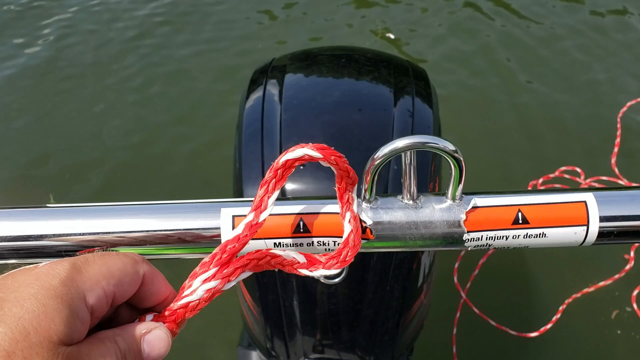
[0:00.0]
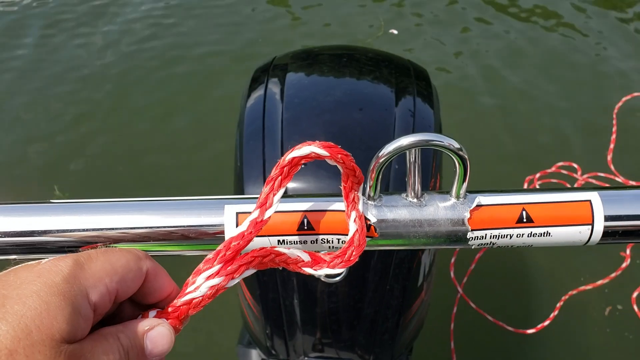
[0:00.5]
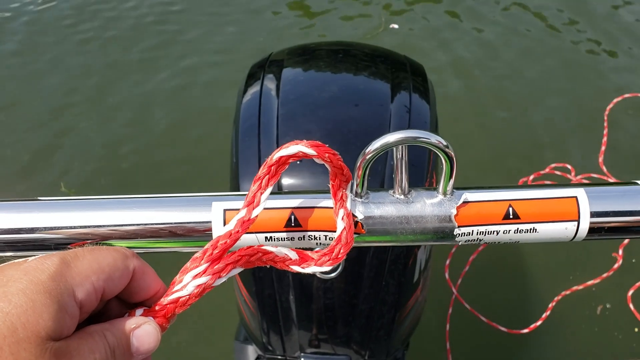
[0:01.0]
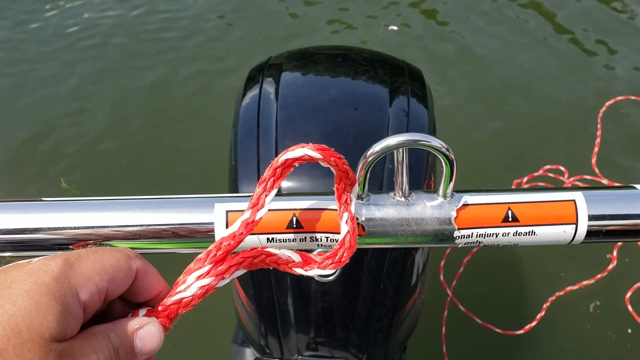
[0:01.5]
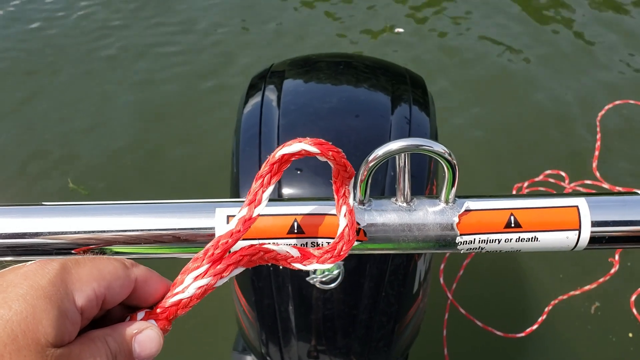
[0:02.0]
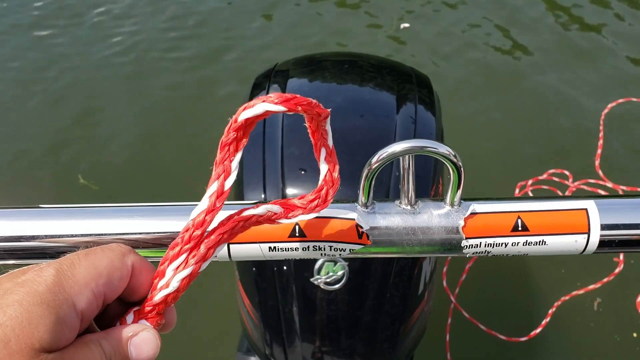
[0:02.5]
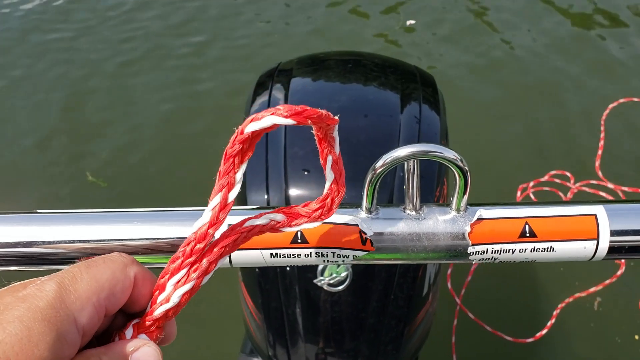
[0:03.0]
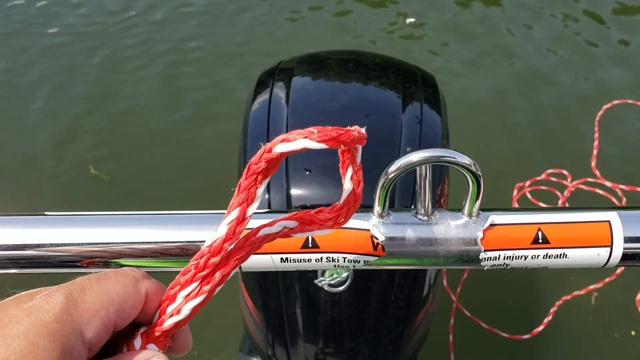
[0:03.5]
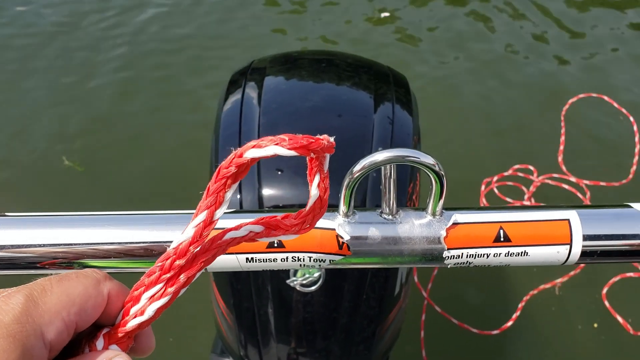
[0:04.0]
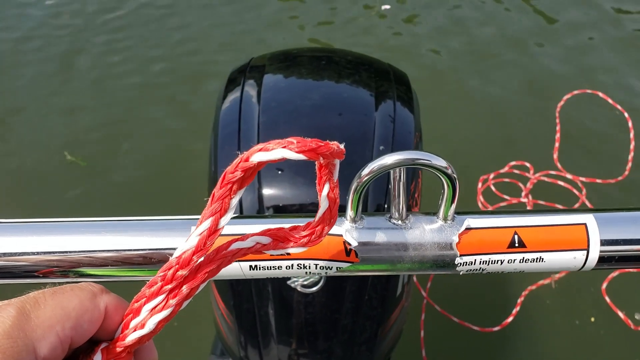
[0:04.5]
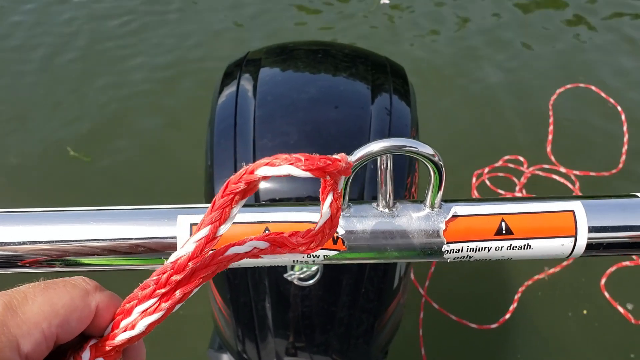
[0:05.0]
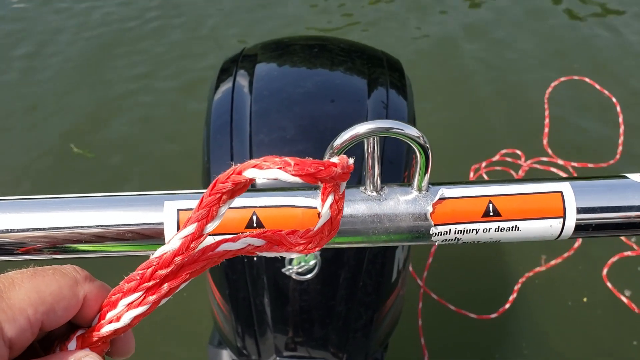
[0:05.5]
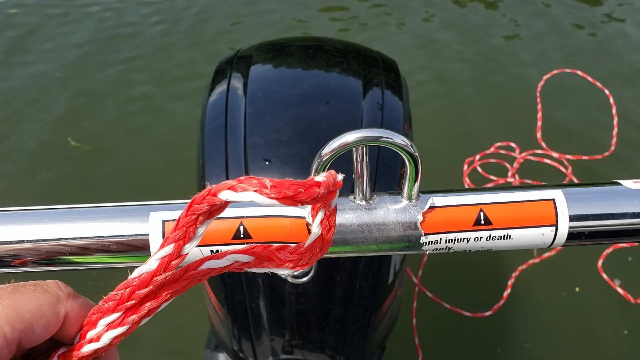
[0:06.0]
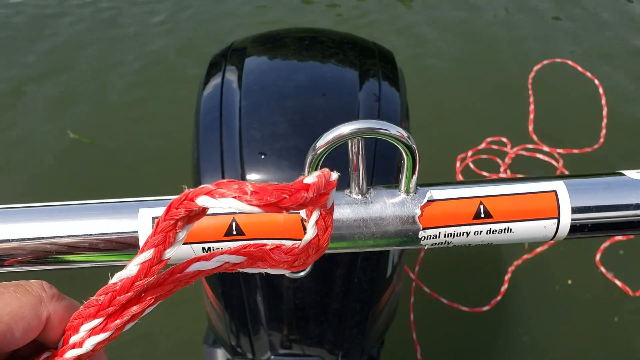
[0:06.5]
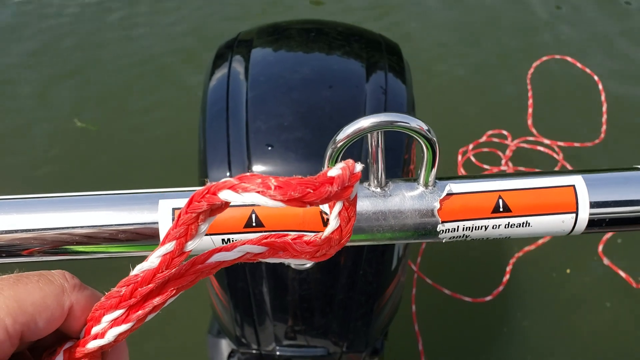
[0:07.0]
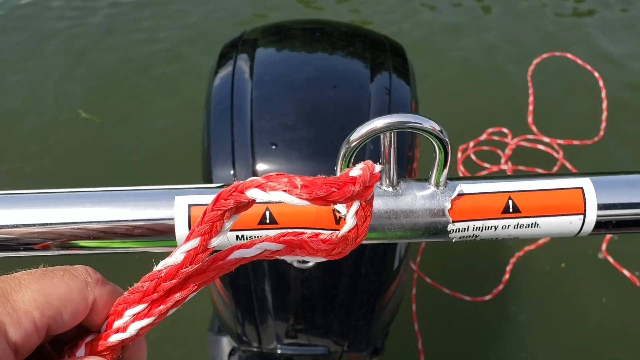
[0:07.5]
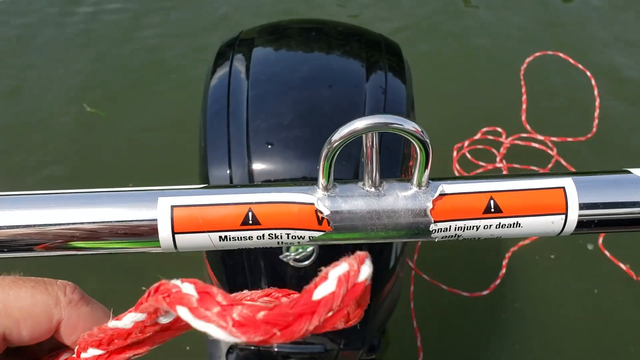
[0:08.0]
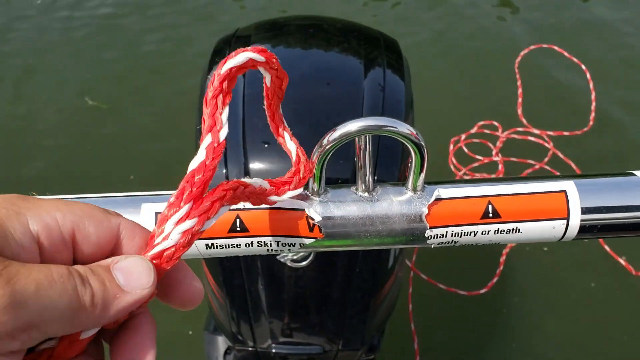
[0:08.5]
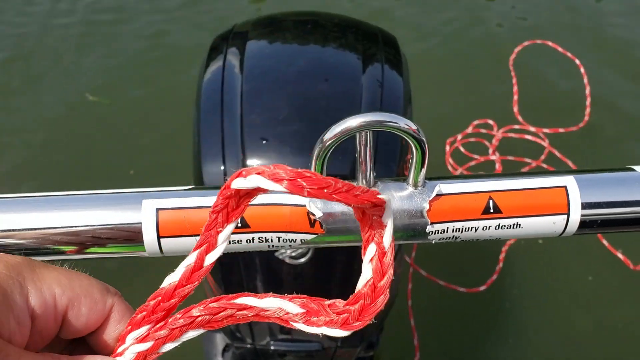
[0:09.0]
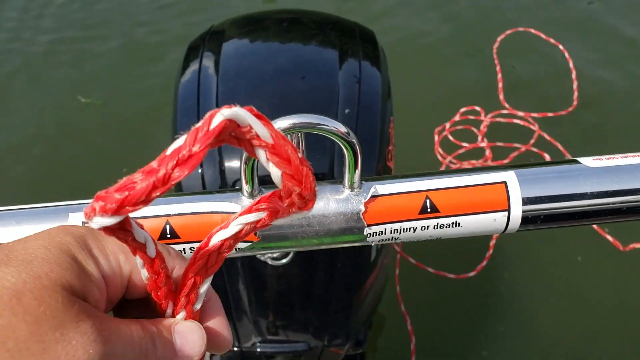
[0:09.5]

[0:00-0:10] The edge of a motorboat is seen in a first-person recording by a man; only his hand is visible. He holds a frayed red and white wire along the edge. Below are a metal bar, the black motor underneath it, and beneath that the water the boat is on. More pieces of the frayed wire can be seen to the right of the motor. The man holds the frayed red and white wire up to the camera, giving a close-up of it. A warning label on the gray bar has been ripped in half and is not readable, but what remains is a white sheet of paper with an orange highlighted header bearing a caution sign that looks like a black triangle with a white exclamation point inside it.